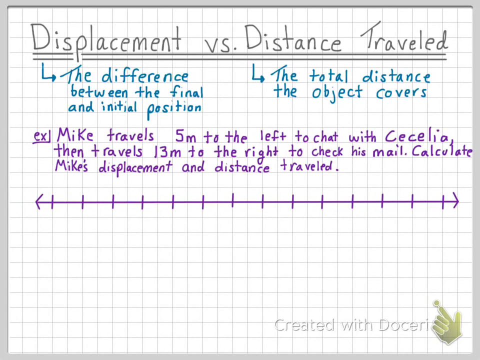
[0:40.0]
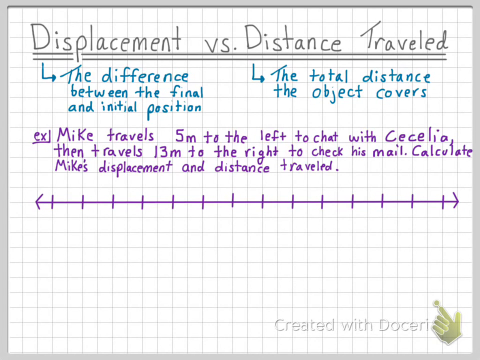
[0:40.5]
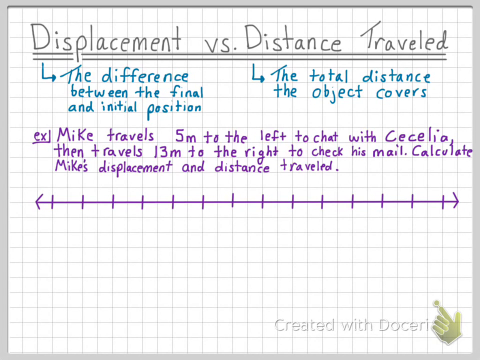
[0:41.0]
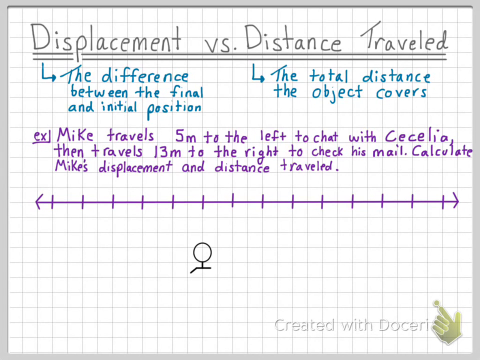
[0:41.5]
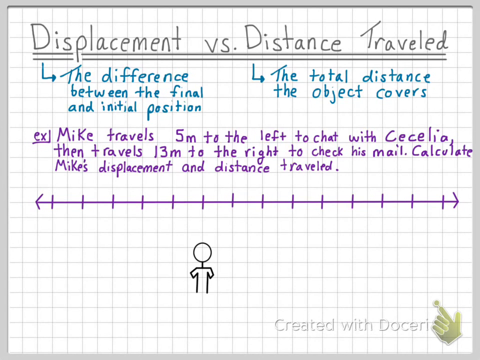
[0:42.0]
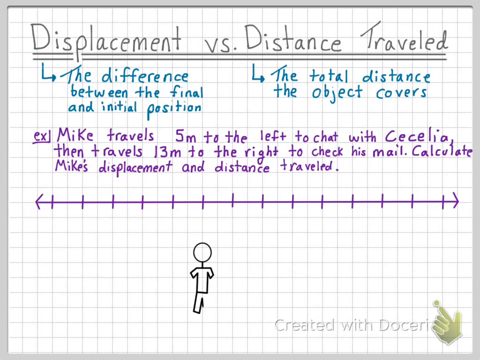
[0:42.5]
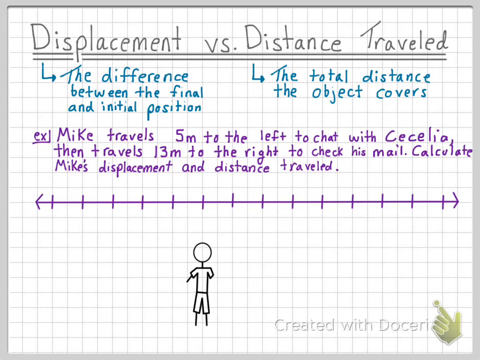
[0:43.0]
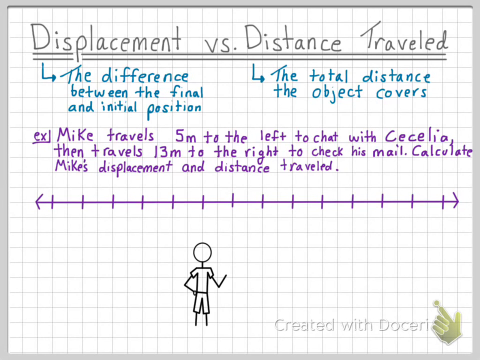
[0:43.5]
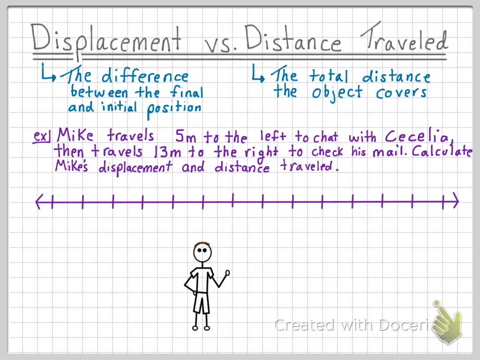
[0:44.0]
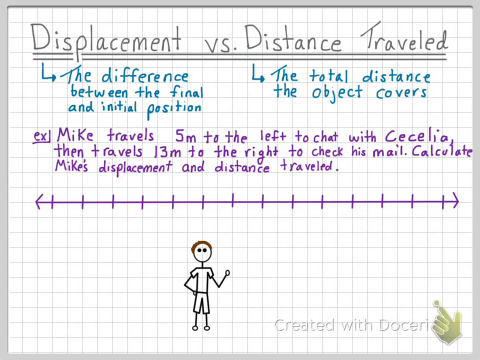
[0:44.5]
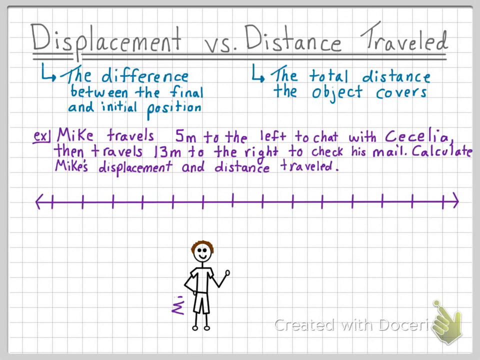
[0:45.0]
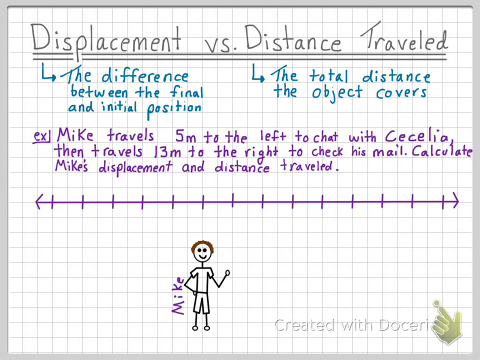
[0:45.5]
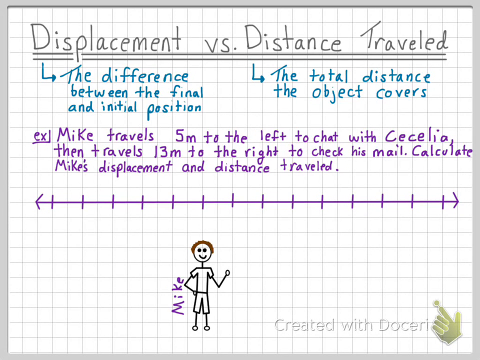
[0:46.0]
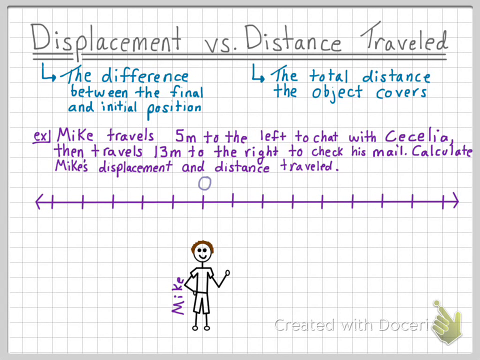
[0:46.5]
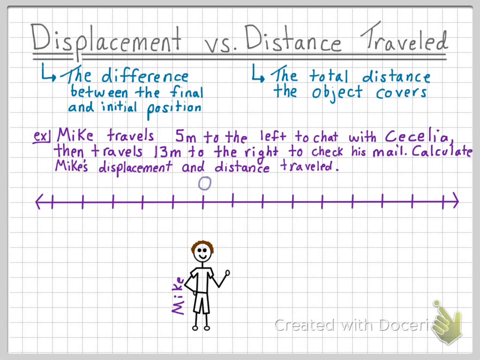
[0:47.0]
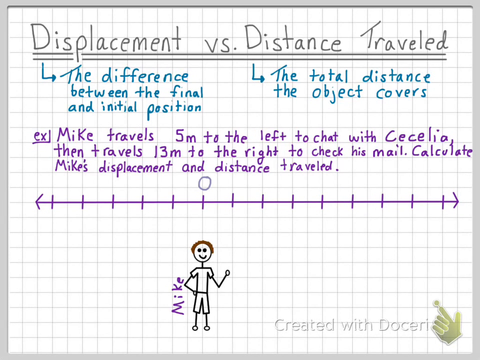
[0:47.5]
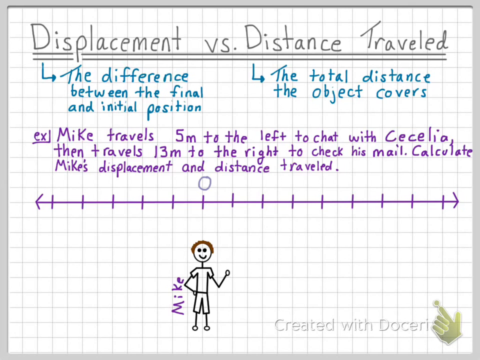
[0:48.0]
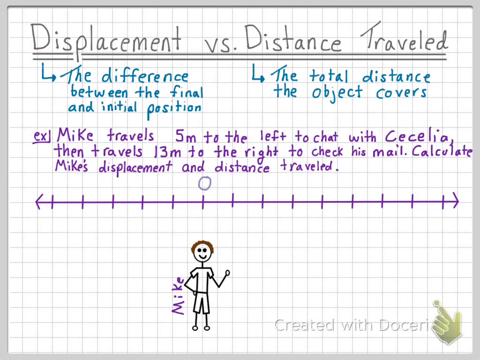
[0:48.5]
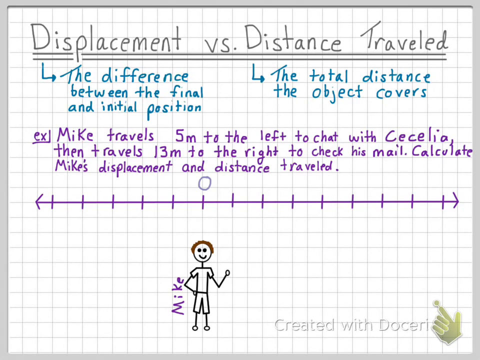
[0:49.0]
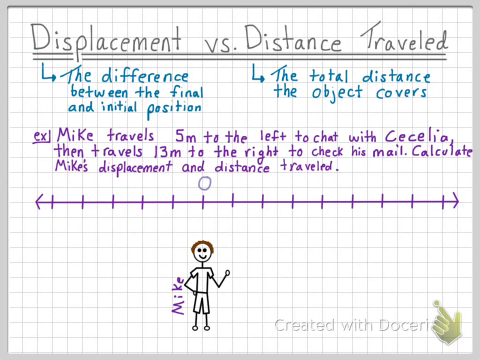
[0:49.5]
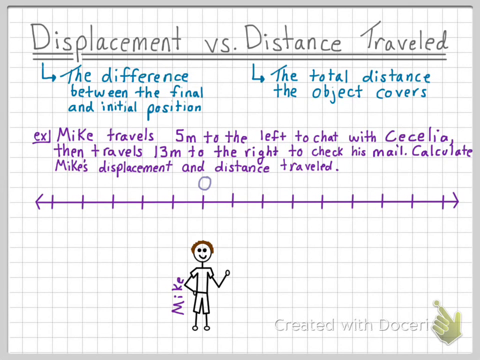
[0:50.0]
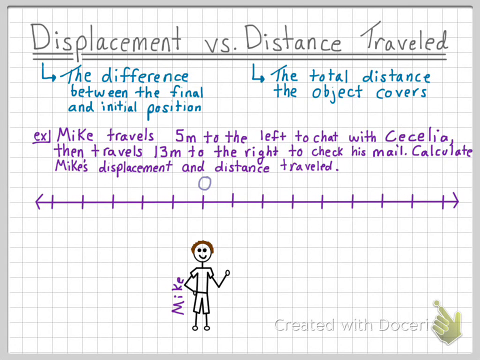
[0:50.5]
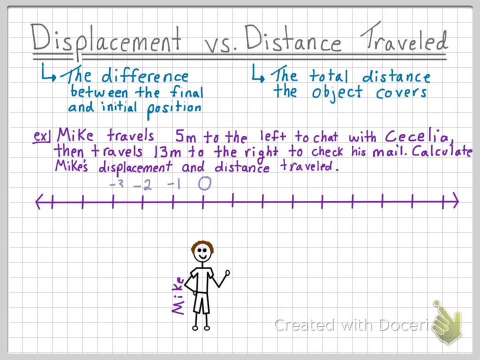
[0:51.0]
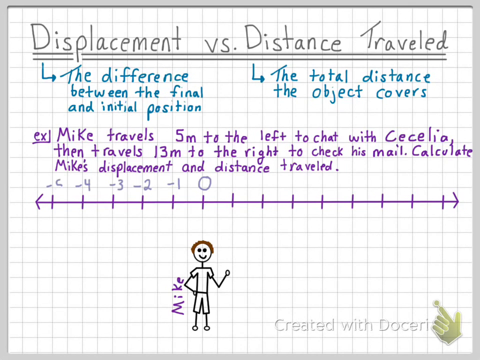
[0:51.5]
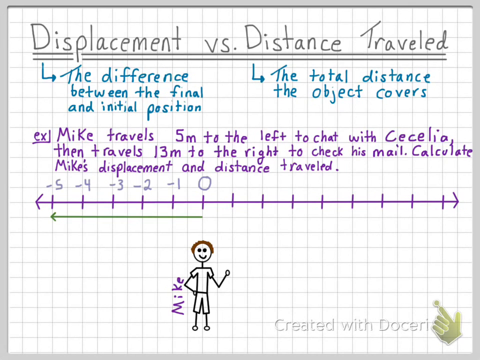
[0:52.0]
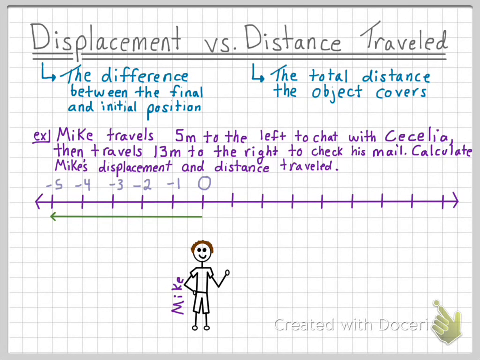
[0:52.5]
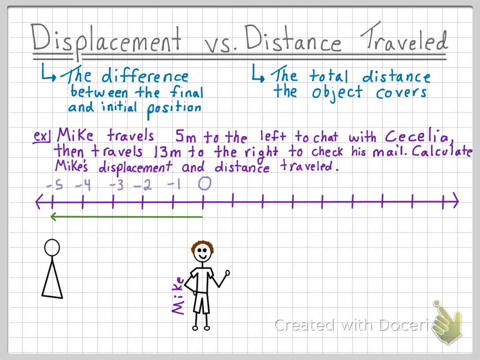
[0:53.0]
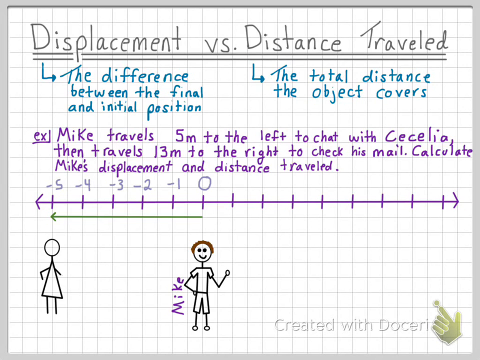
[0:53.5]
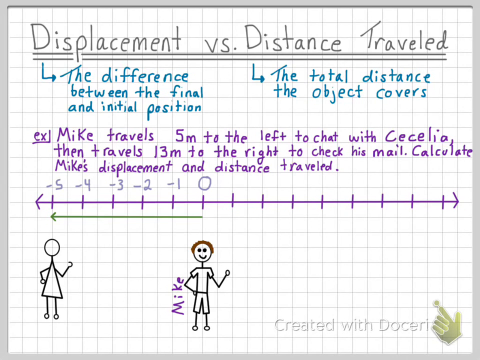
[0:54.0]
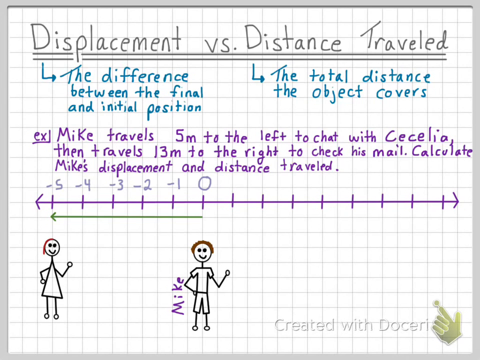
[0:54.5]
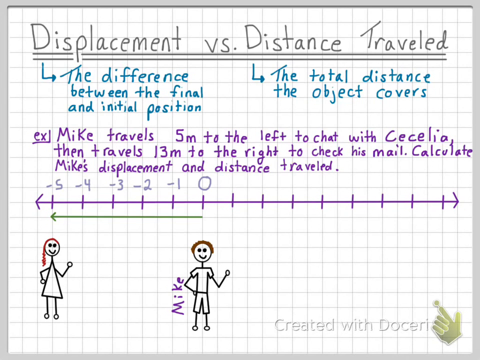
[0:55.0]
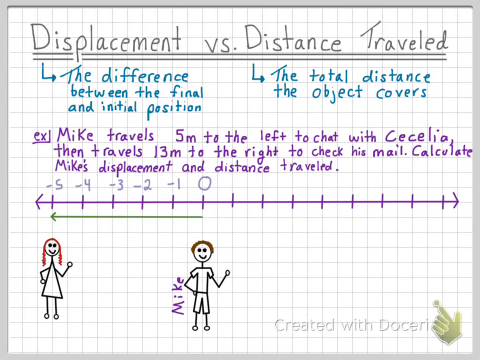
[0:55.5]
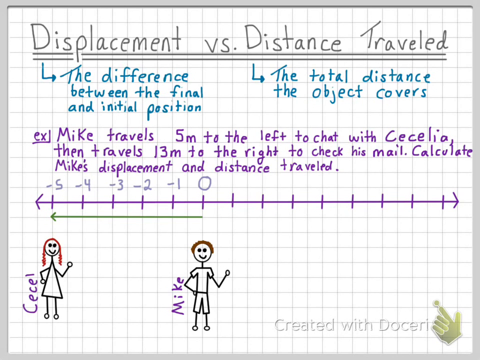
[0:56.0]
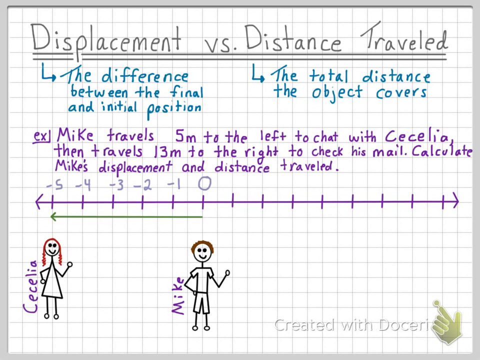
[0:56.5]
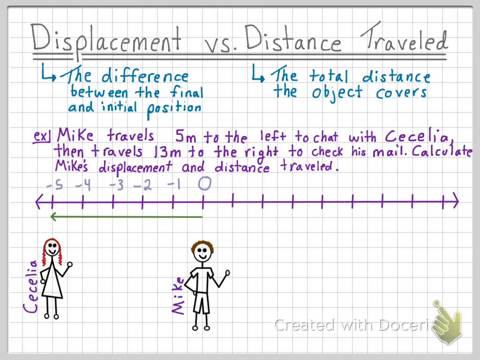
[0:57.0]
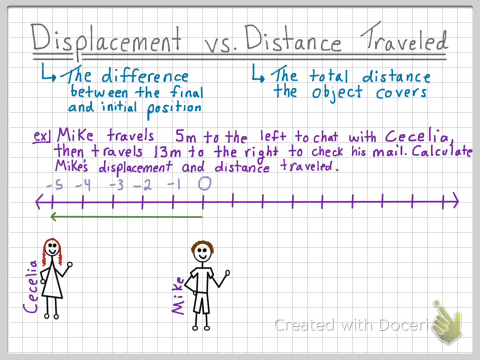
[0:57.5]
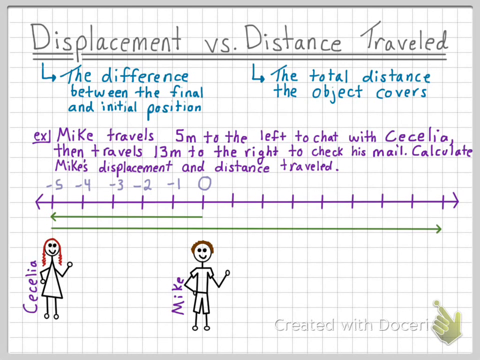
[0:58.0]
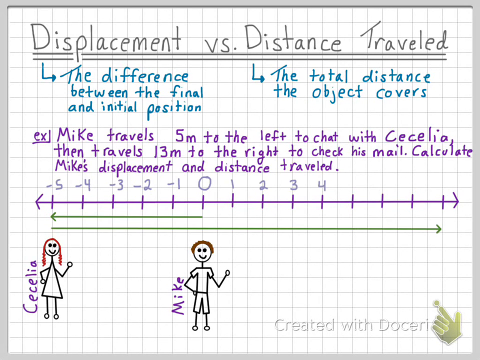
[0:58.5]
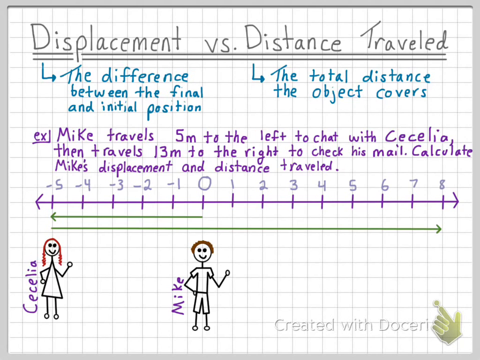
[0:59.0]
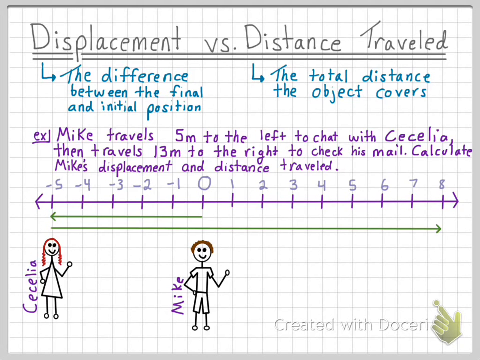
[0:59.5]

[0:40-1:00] The grid whiteboard keeps the same information down to the line graph. A figure of Mike is drawn with short brown hair, smiling, and then Cecilia is drawn with long red hair, smiling, underneath the line graph. Numbers are marked on the line graph: Mike is at zero and Cecilia is five meters to the left, at negative five, and a mark is made from zero to negative five. The example and the line graph are in purple ink. Mike and Cecilia are black-ink stick figures with colored hair, and their hands and feet are circles.